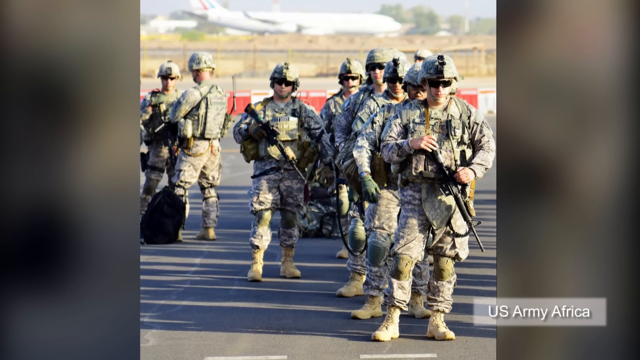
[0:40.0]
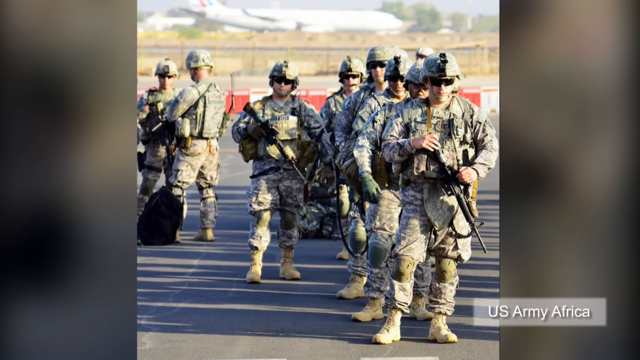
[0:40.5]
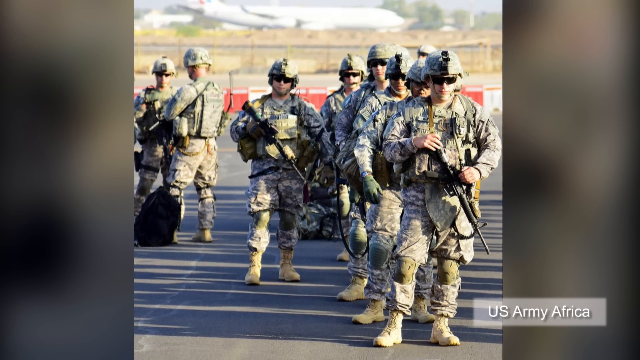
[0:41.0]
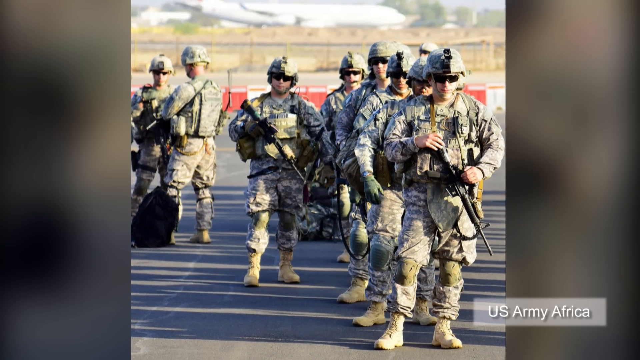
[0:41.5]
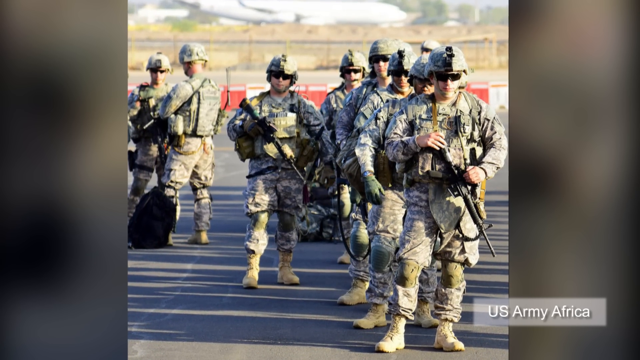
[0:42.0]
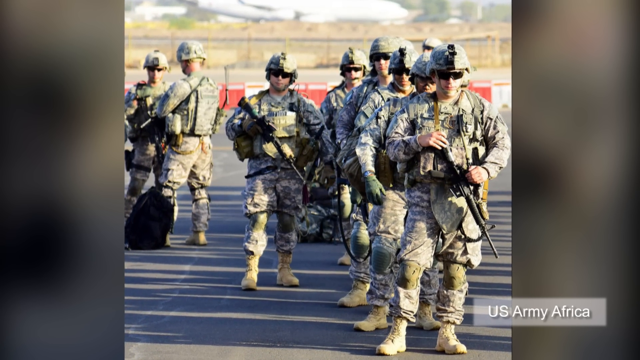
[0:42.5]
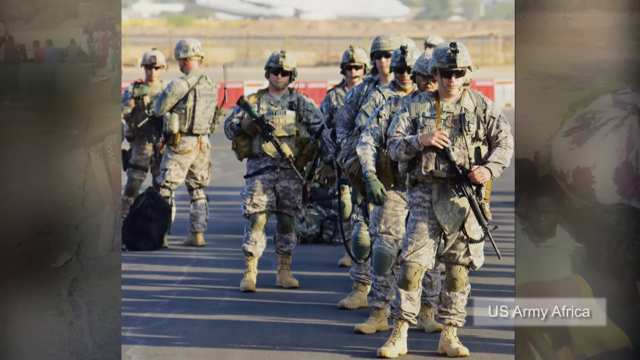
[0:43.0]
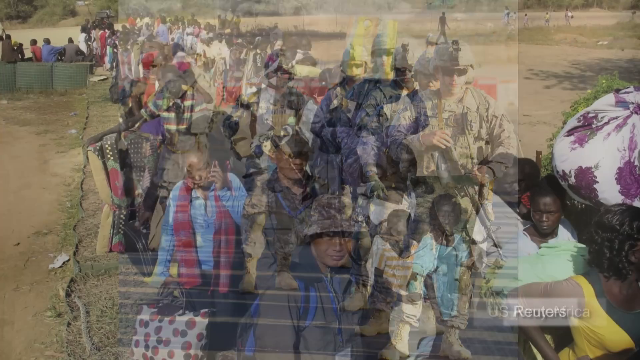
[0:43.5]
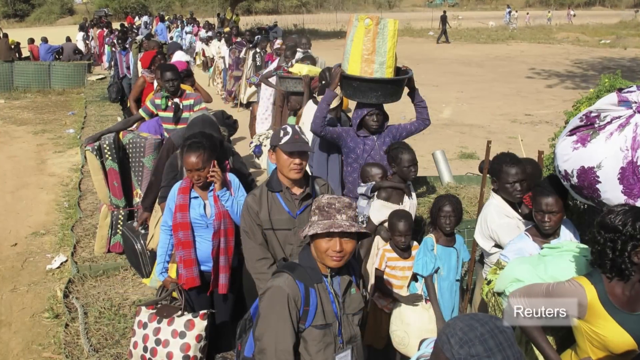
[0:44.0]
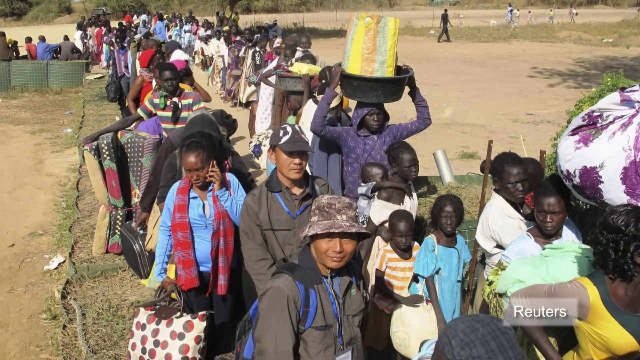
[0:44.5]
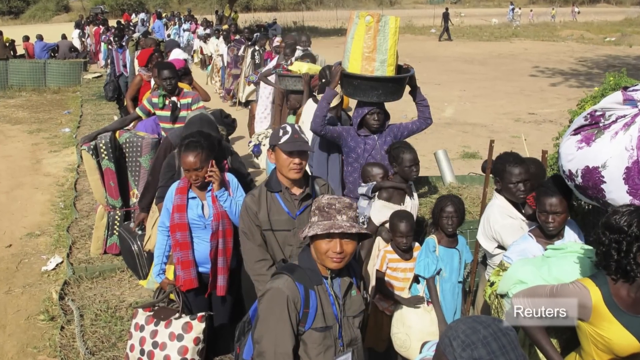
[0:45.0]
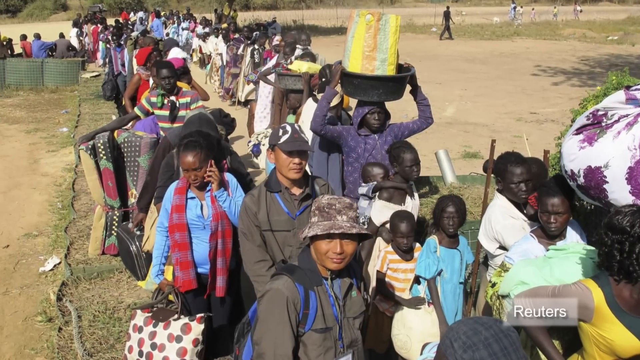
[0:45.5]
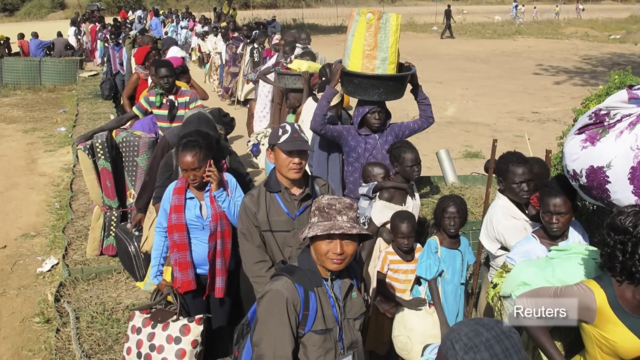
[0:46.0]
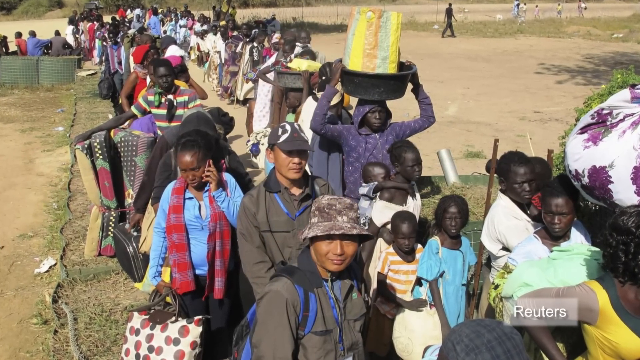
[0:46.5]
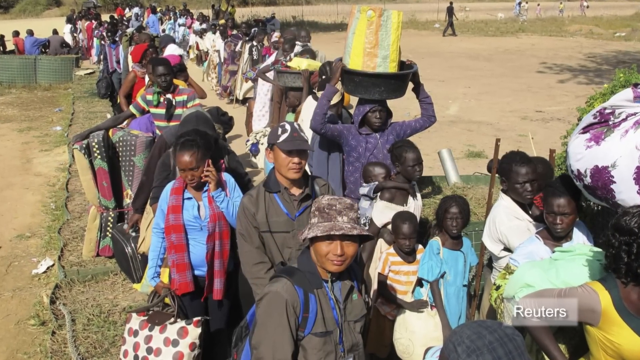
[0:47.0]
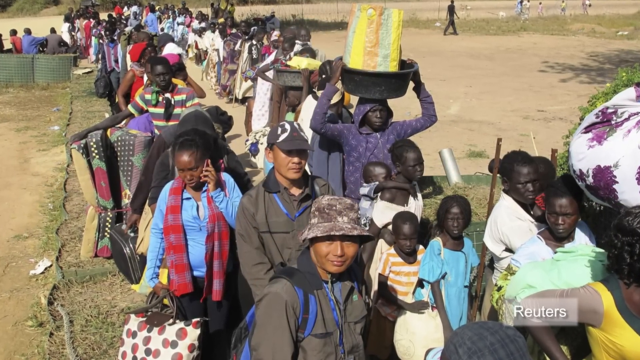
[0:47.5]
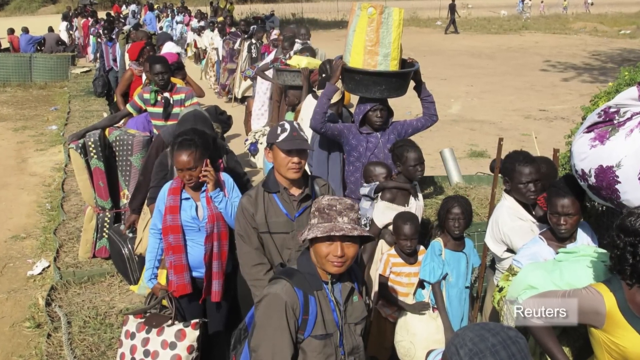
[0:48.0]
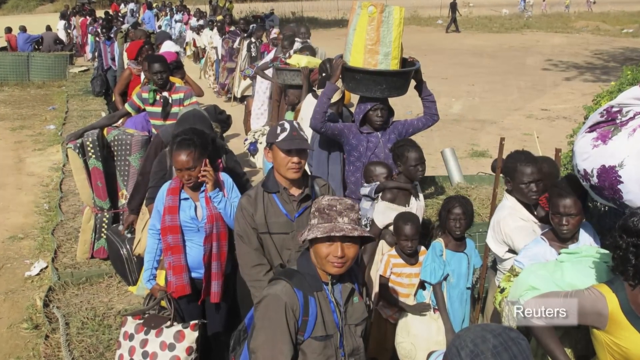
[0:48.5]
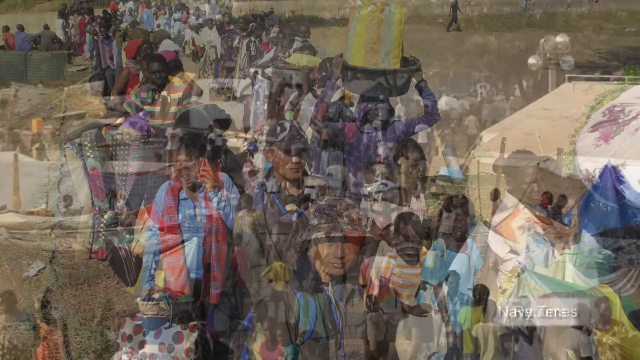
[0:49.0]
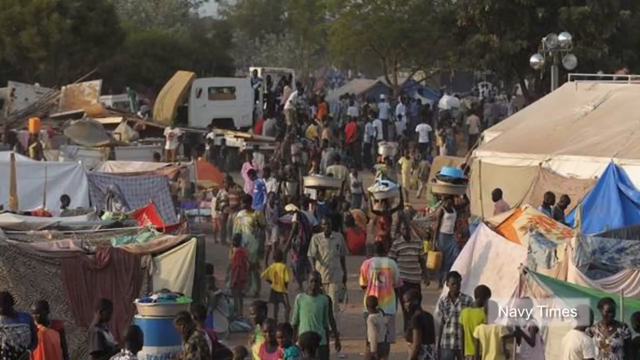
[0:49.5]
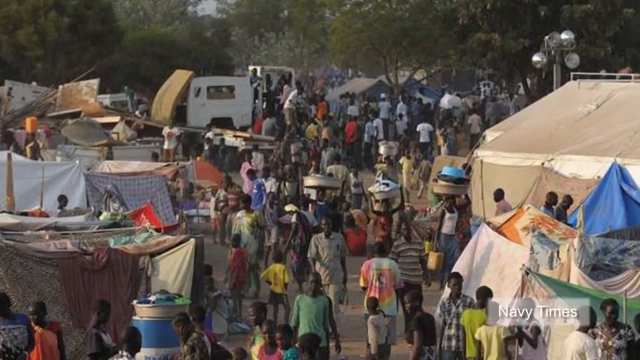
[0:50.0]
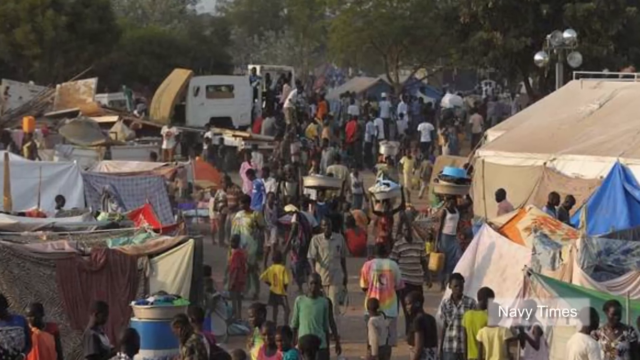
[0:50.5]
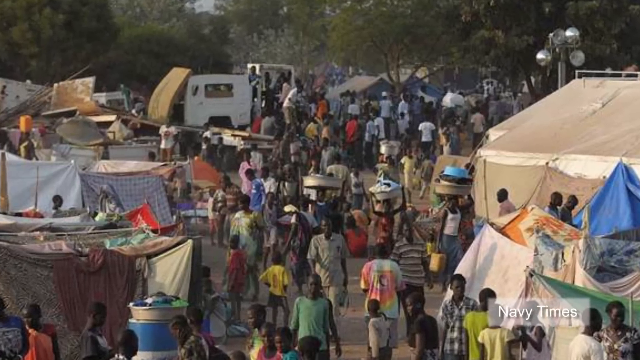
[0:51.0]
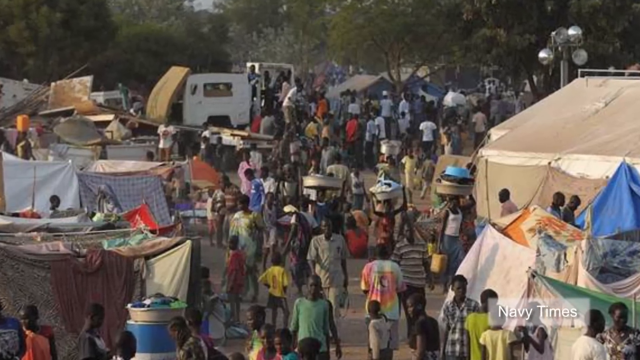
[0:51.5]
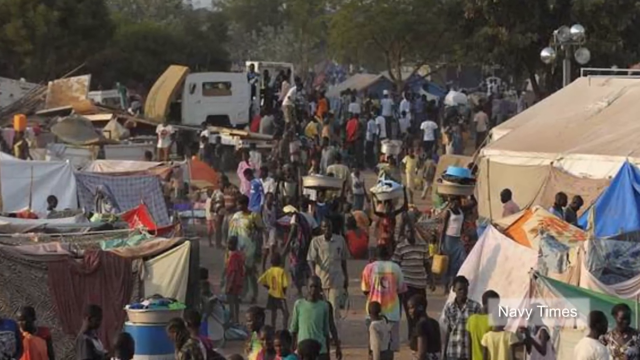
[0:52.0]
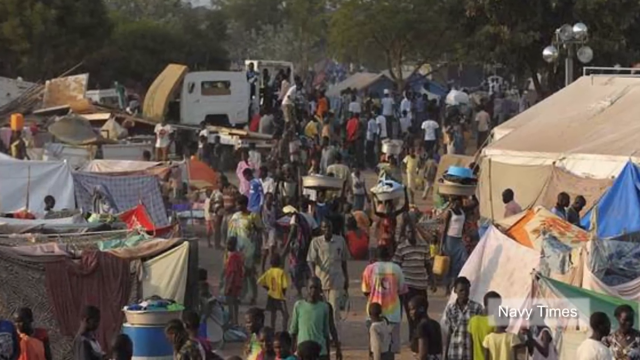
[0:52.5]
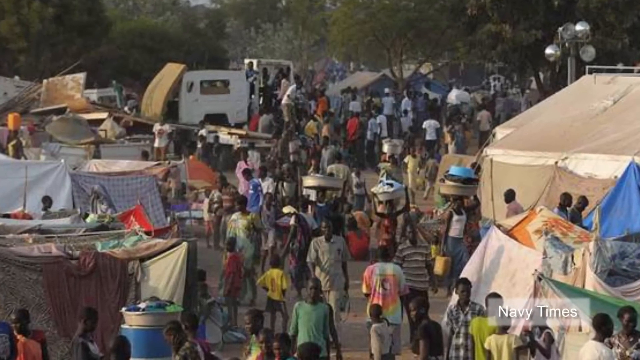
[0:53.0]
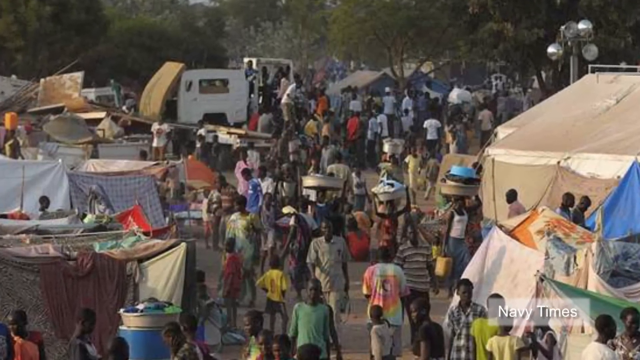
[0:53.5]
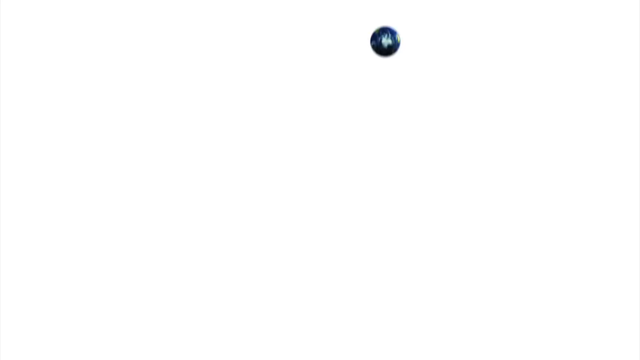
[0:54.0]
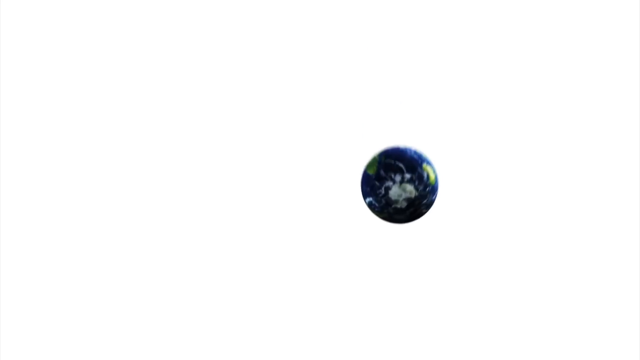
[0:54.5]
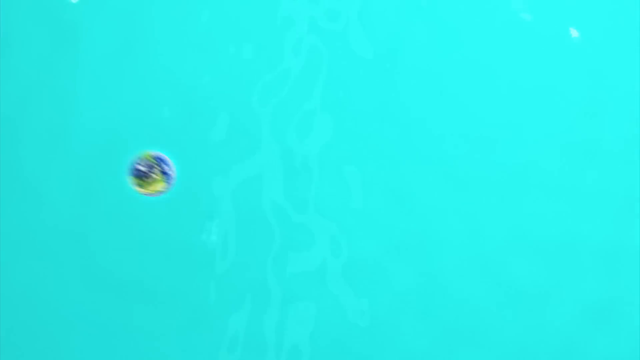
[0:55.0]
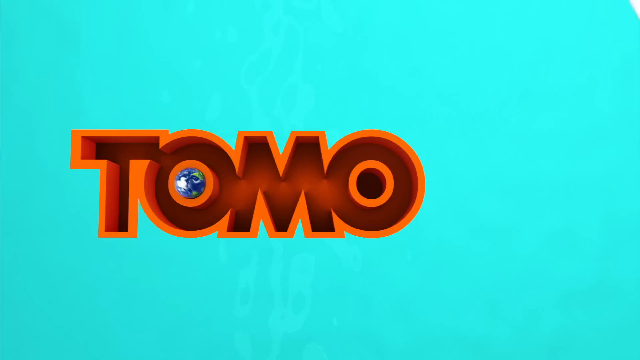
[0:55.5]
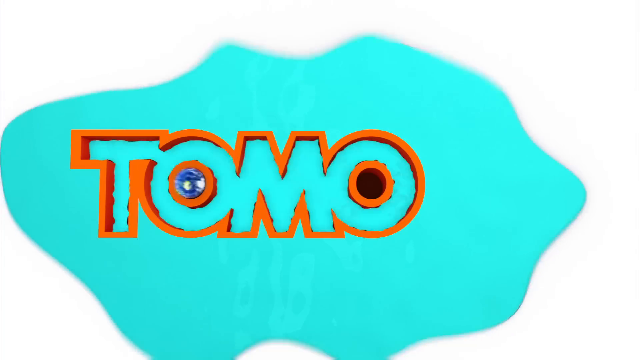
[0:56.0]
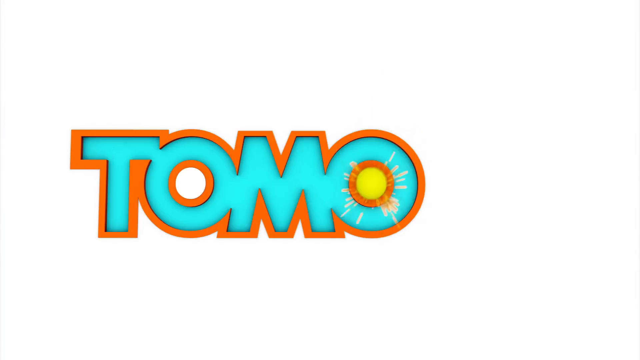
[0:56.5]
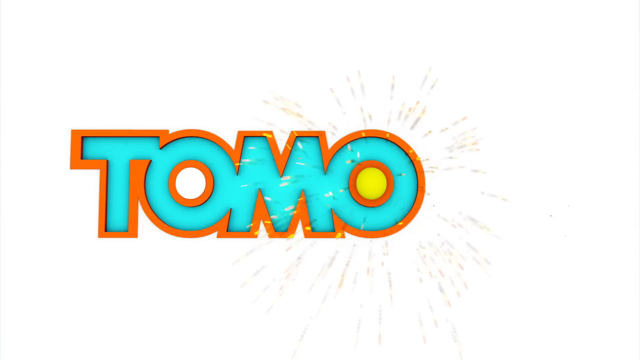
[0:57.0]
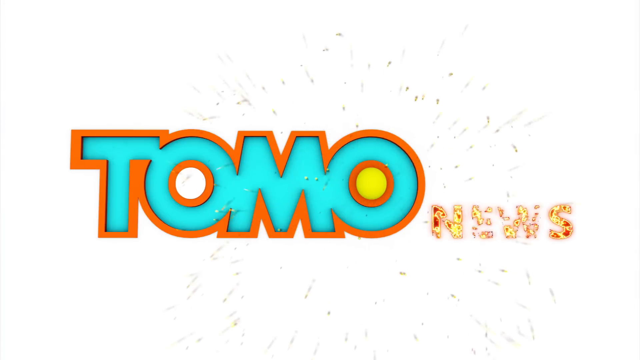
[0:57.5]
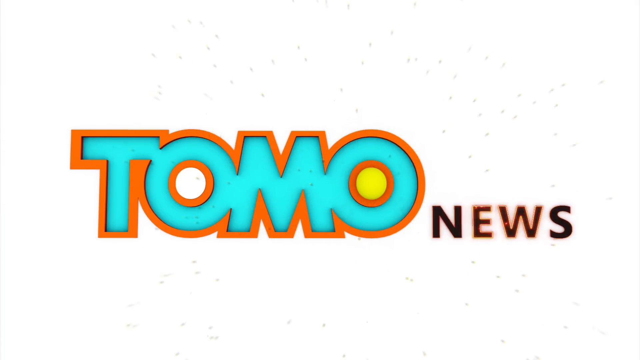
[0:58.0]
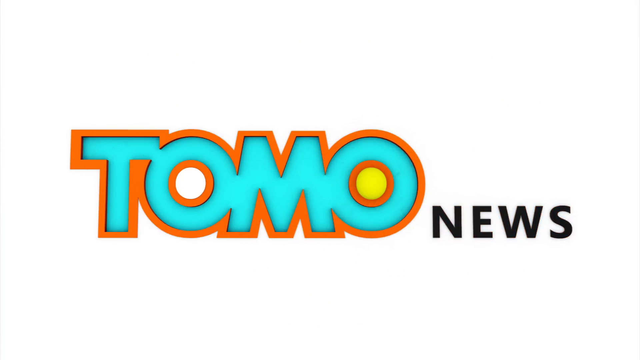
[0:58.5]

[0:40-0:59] Soldiers walk around, a couple of them carrying guns while others just walk. A large group of people appears, most of them with very dark skin, carrying their belongings on their heads. The text "routers" appears, and the people form almost two lines together. Somebody is on a phone. A very crowded group of people is among blanket tents and different tents, some with things on their heads, walking around. The text "Tomo News" appears.